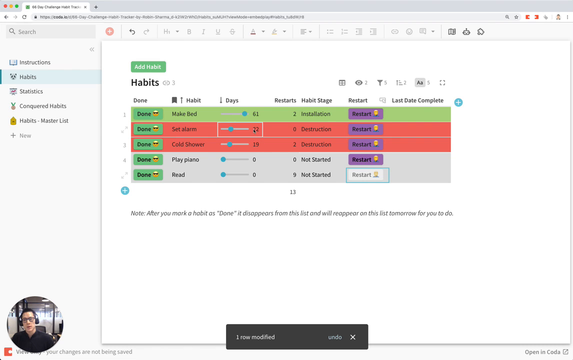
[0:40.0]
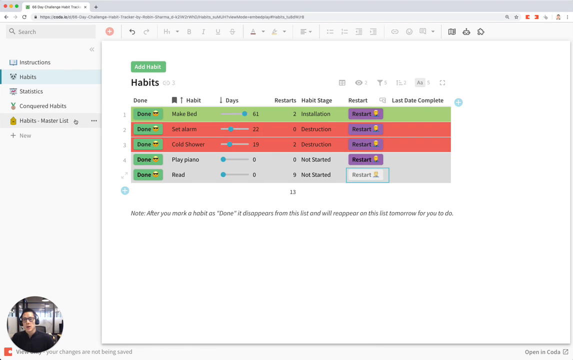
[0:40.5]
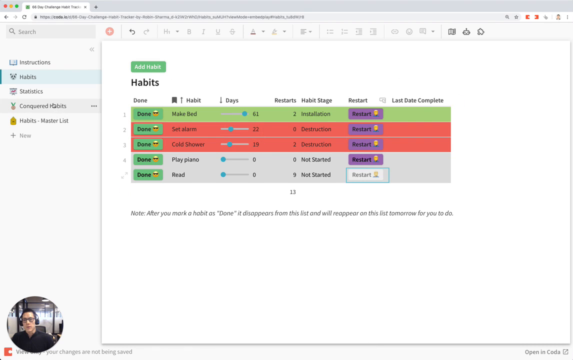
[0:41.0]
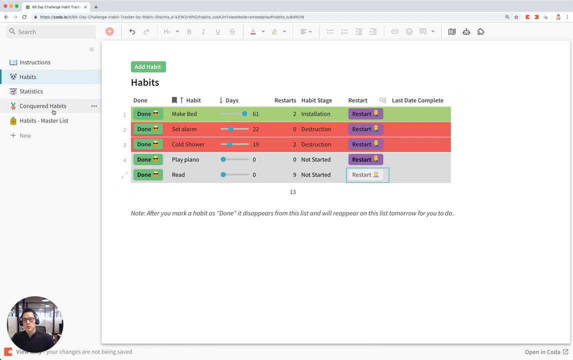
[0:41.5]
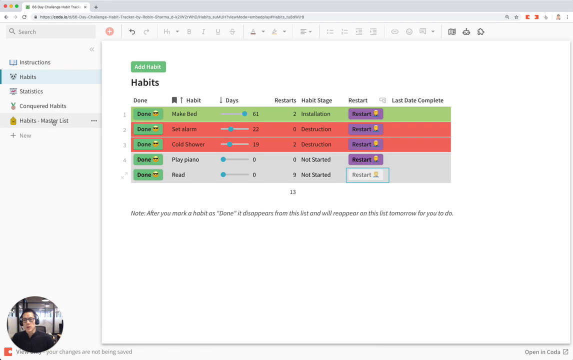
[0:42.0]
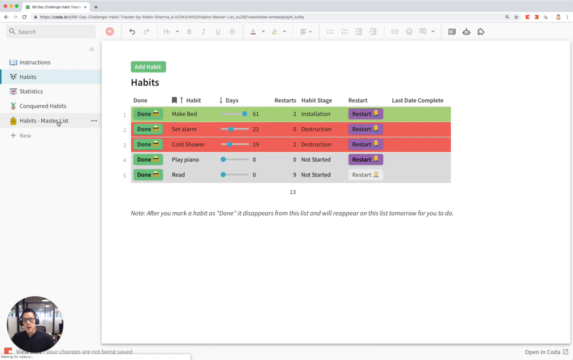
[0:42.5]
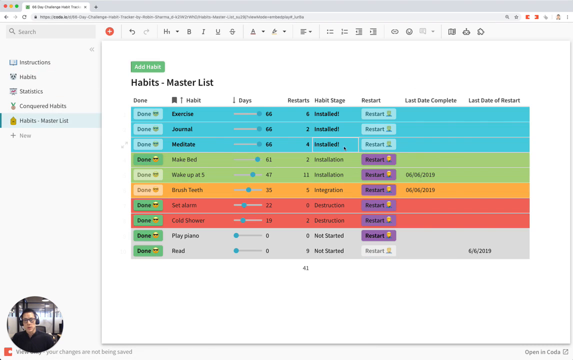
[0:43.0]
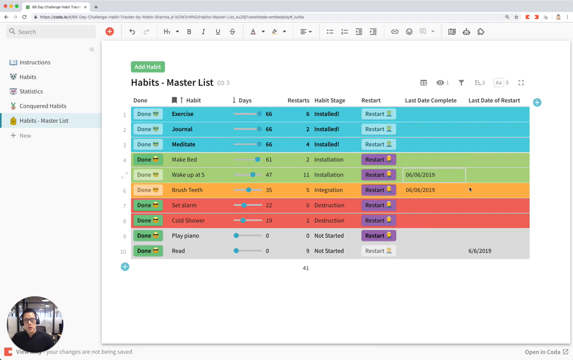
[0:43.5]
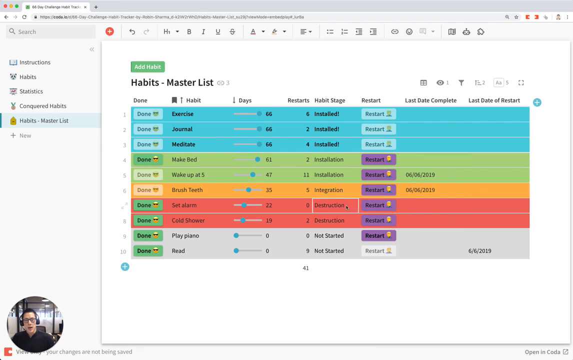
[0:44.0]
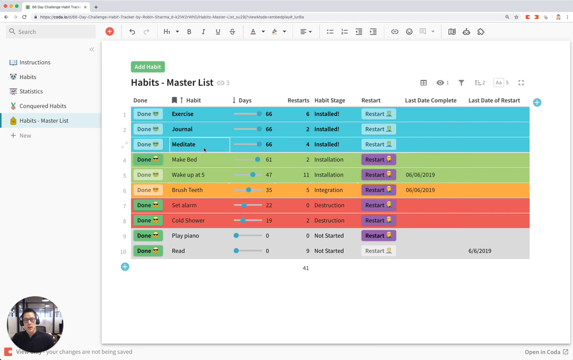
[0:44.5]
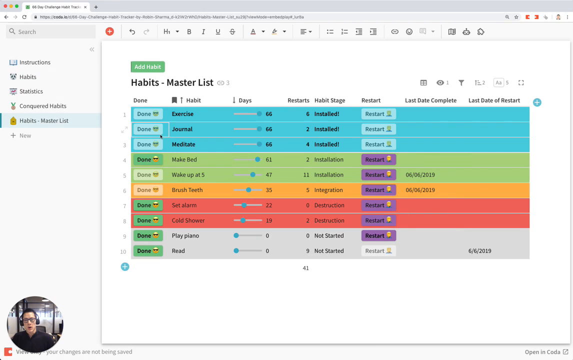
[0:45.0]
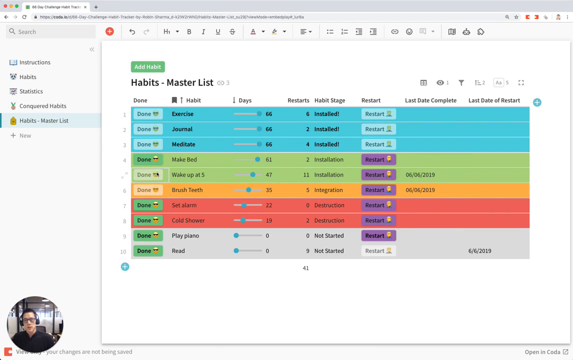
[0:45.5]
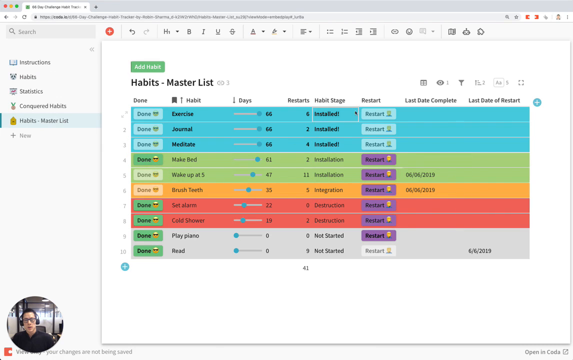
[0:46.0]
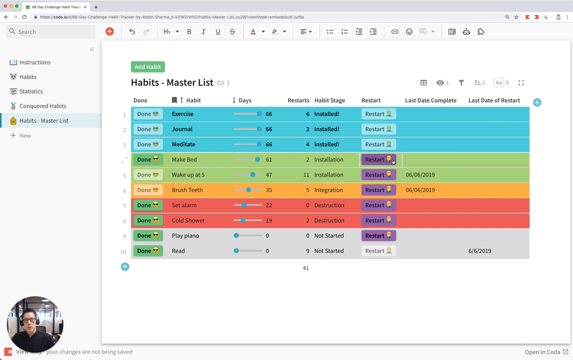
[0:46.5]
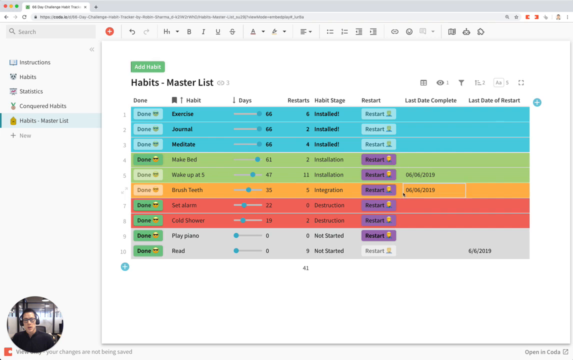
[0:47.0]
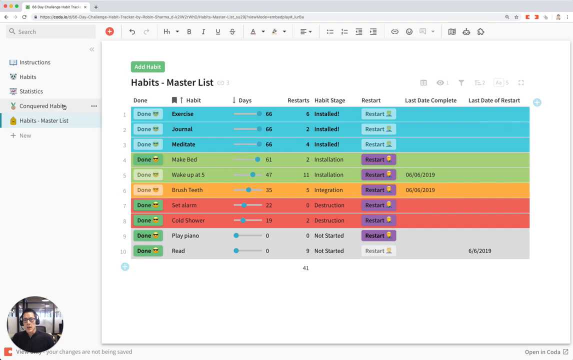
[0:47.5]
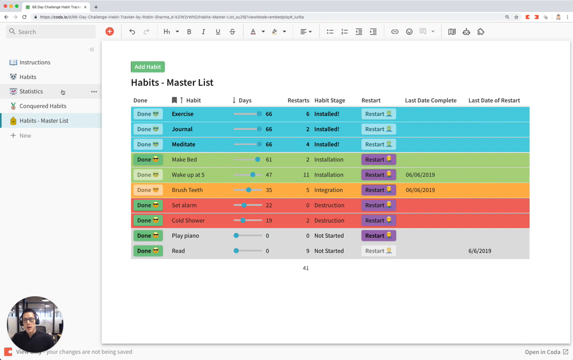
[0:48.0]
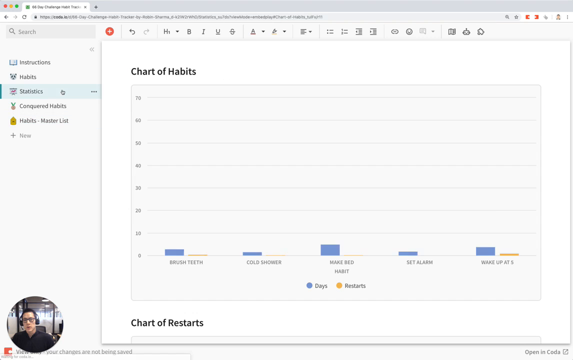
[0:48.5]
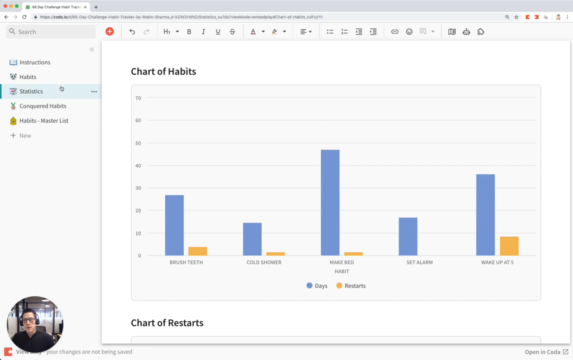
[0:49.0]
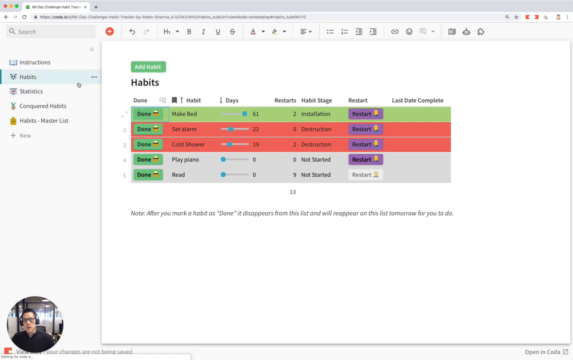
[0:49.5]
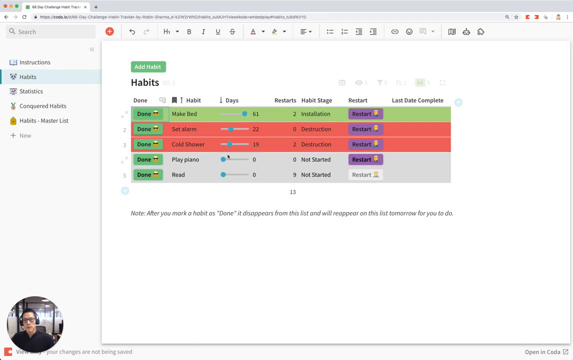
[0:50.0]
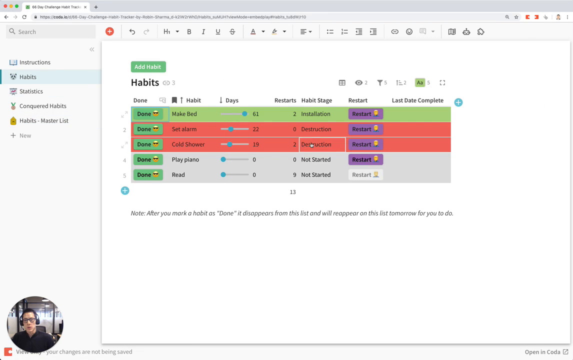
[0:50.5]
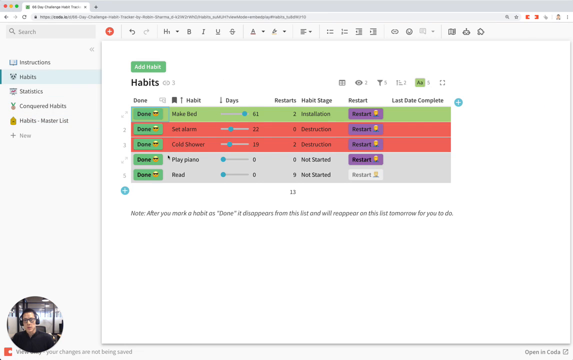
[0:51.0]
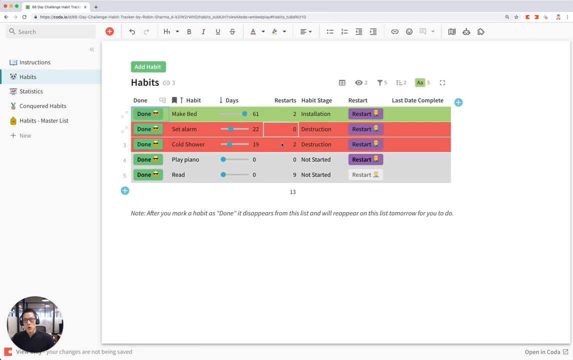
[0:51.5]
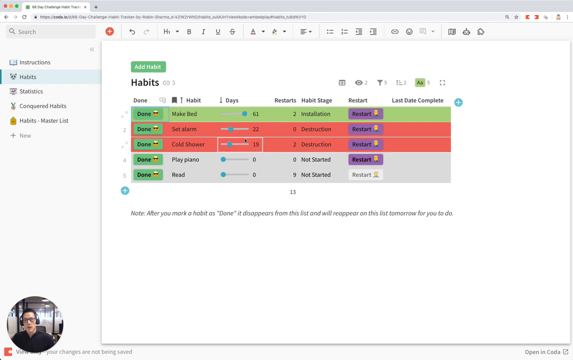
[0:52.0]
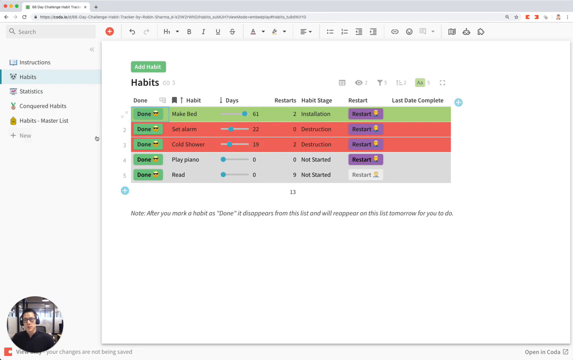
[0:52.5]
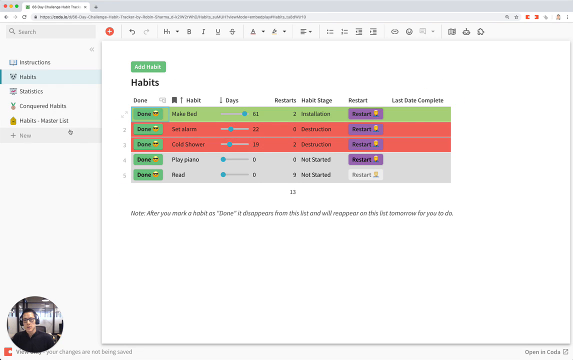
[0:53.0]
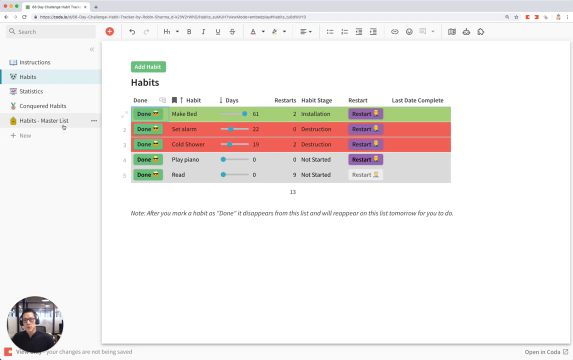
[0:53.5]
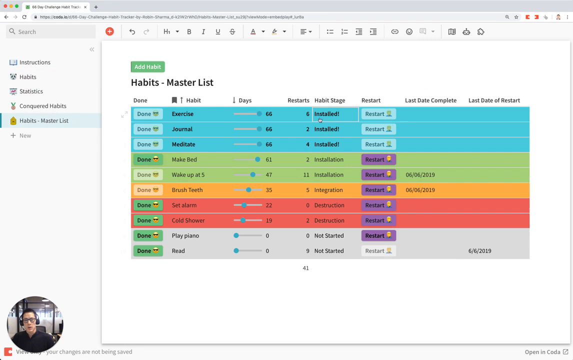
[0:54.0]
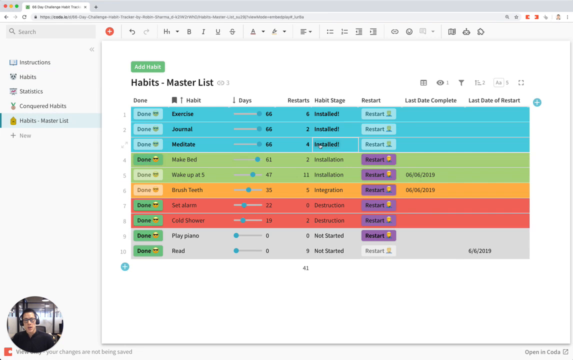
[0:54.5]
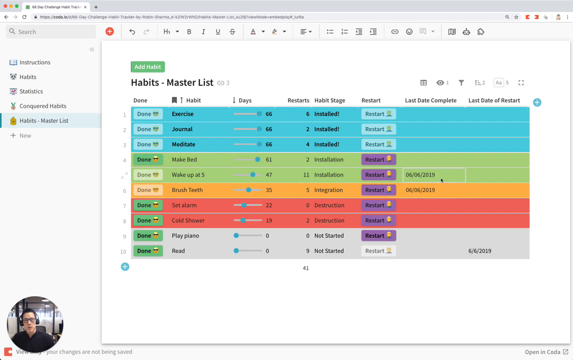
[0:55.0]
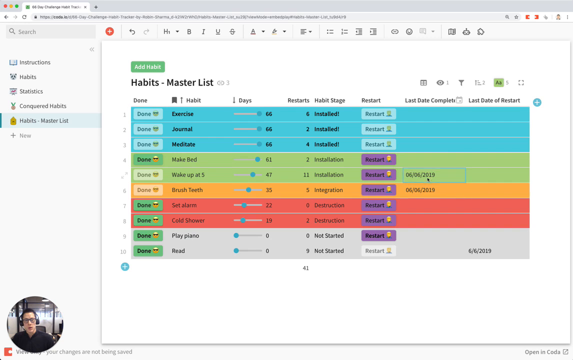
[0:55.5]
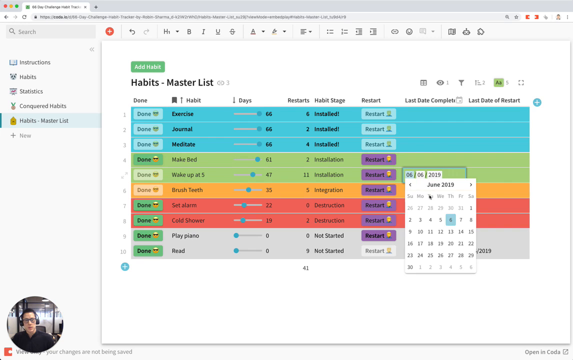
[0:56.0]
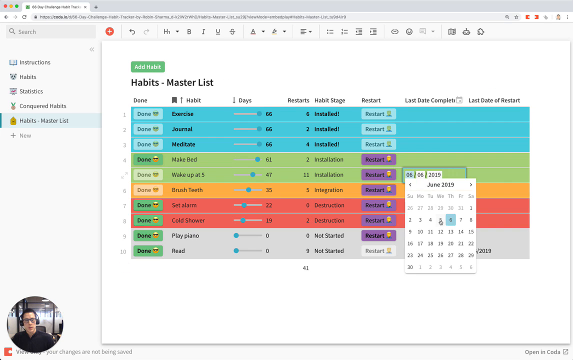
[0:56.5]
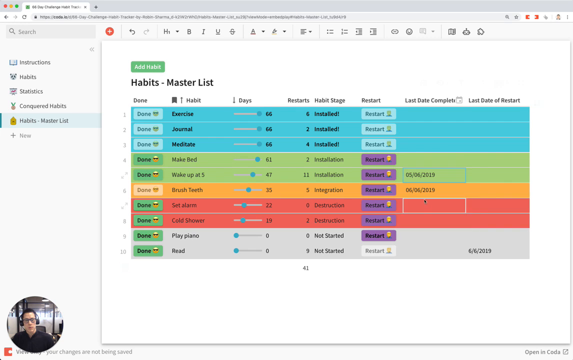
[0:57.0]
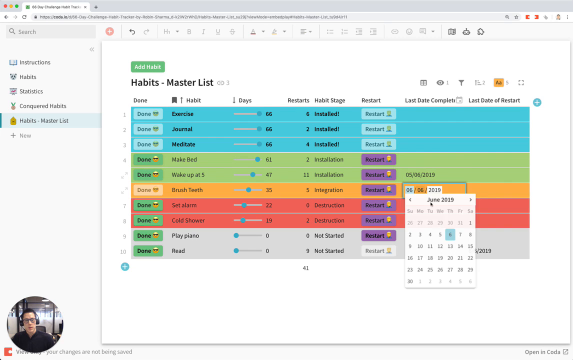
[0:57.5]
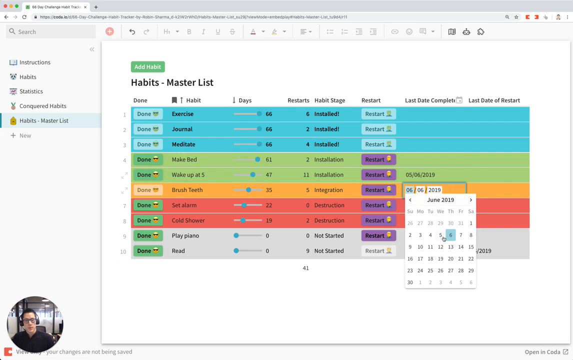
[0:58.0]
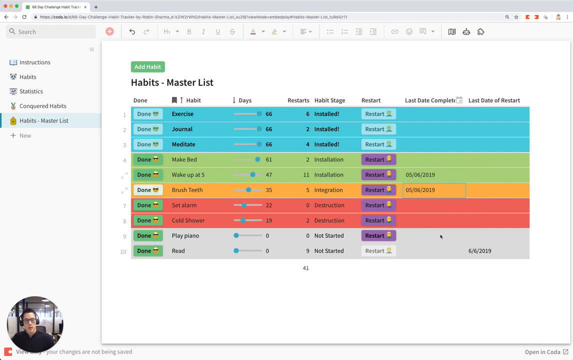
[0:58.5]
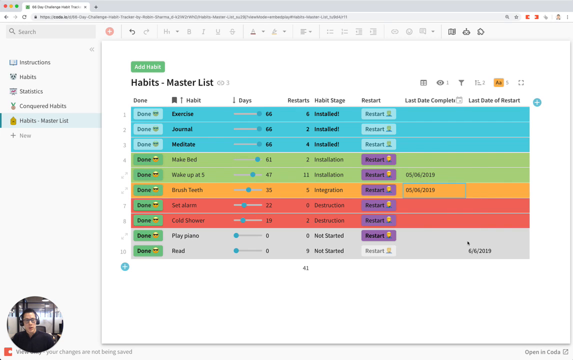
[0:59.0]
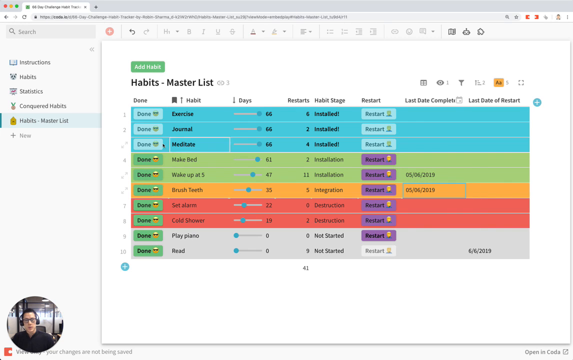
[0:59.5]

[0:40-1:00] He goes to the left-hand side and through the various tabs listed at the top left: instructions, habits, statistics, conquered habits, and habits master list. He clicks the master list, showing an overview of all the habits added previously, including ones not shown on the habits page. The view cuts to the statistics, with graphs for brush teeth, cold shower, make bed, set alarm, and wake up at five, and the text "chart of habits". They go back to the habits page and then to the master habits page, where selecting the last day complete brings up a calendar with a date range that can be chosen, and the dates and each option are shown.